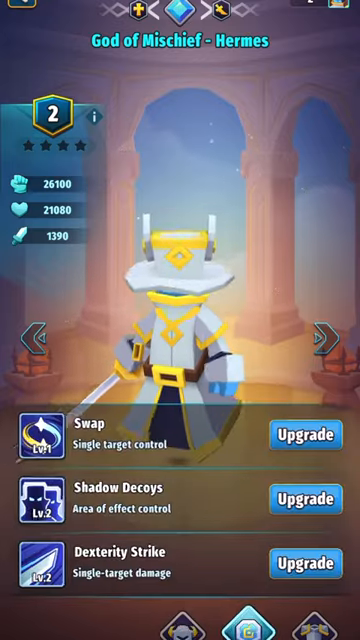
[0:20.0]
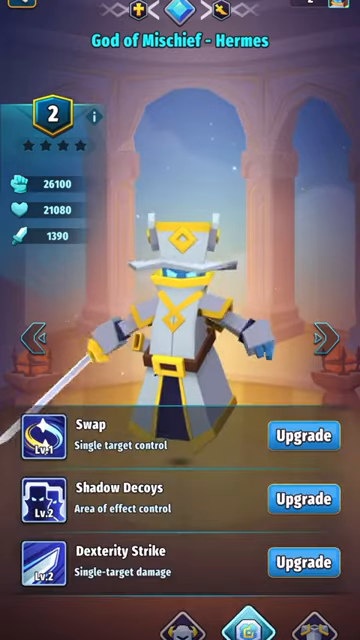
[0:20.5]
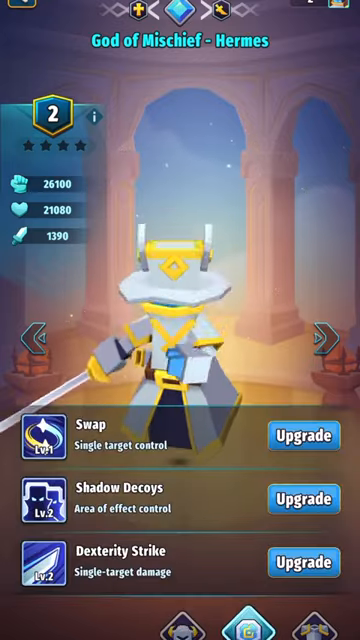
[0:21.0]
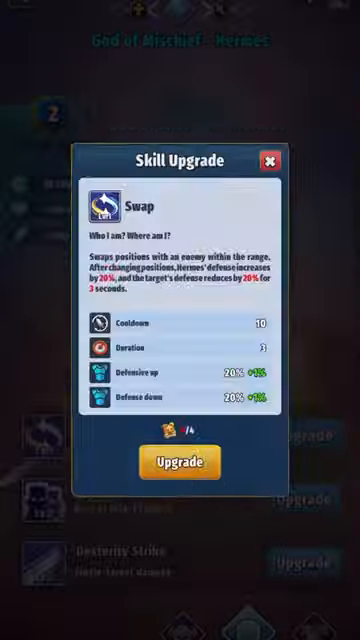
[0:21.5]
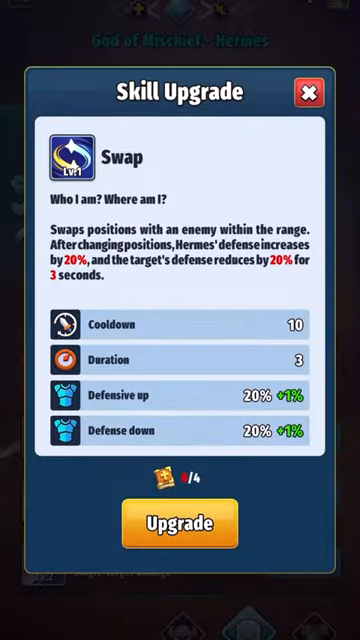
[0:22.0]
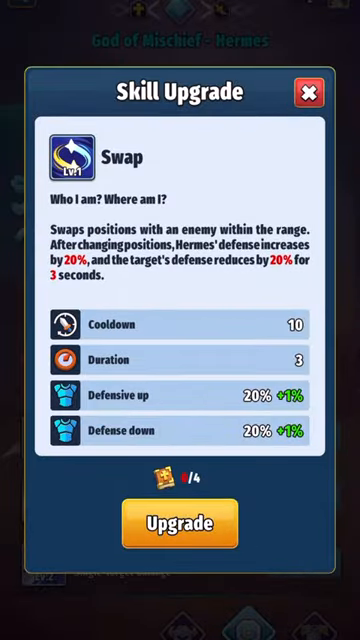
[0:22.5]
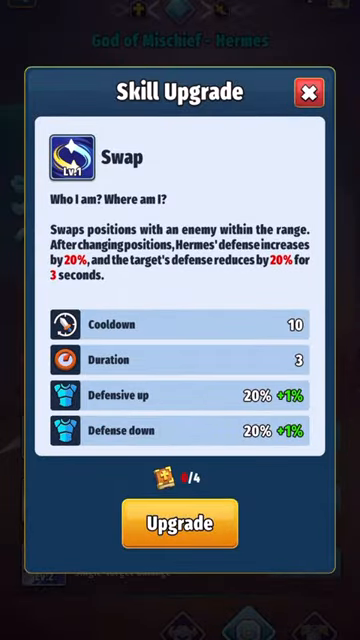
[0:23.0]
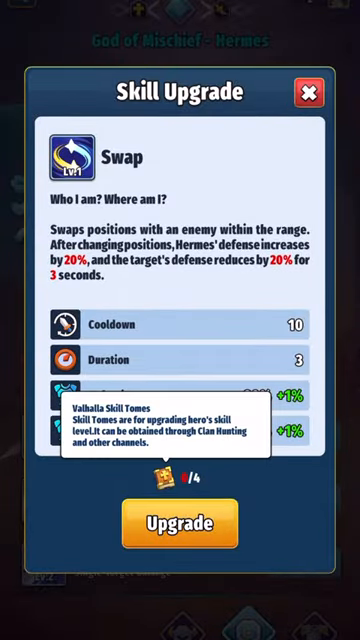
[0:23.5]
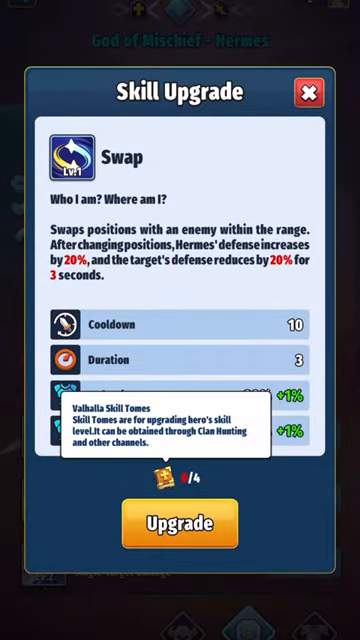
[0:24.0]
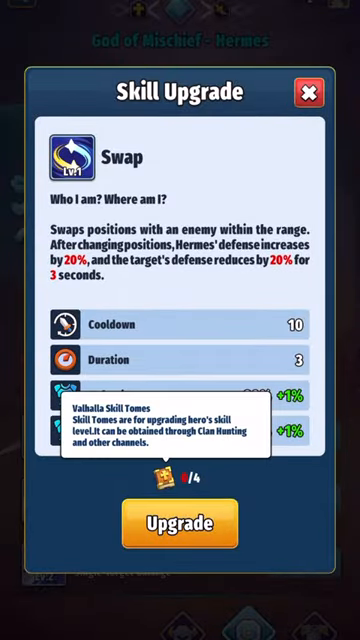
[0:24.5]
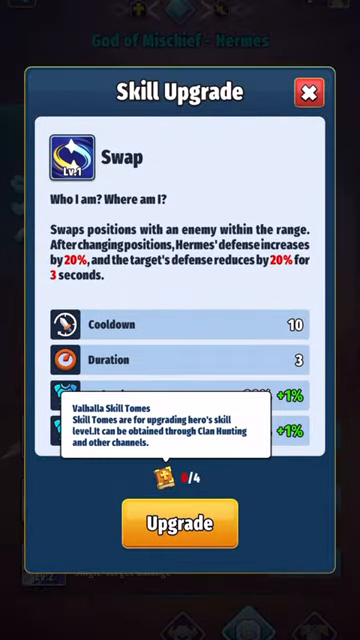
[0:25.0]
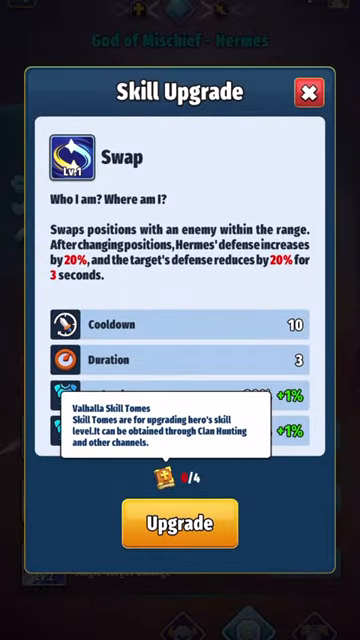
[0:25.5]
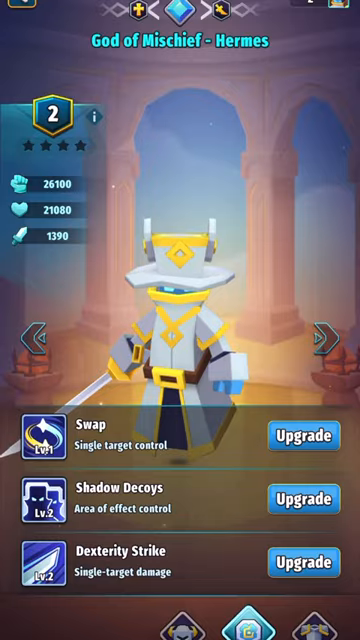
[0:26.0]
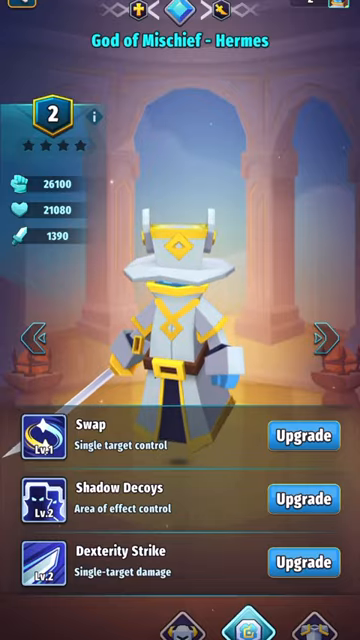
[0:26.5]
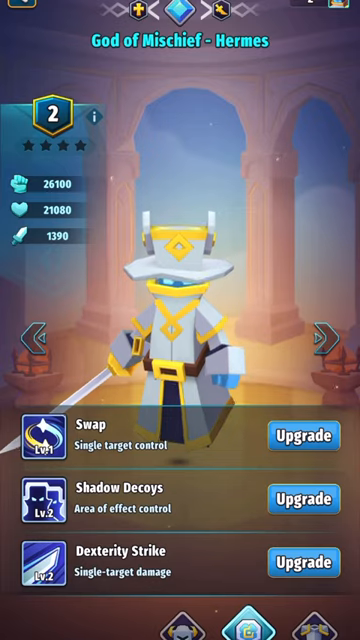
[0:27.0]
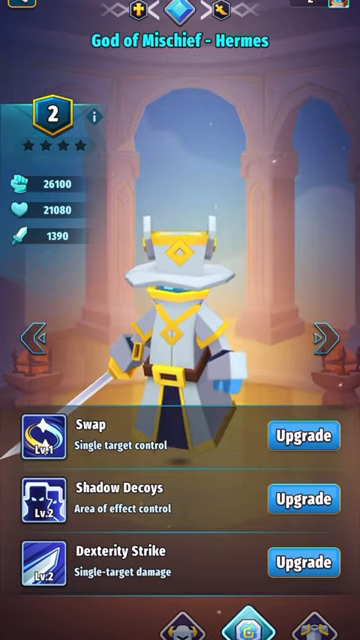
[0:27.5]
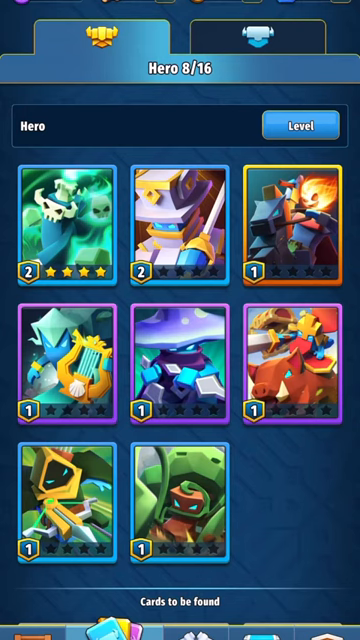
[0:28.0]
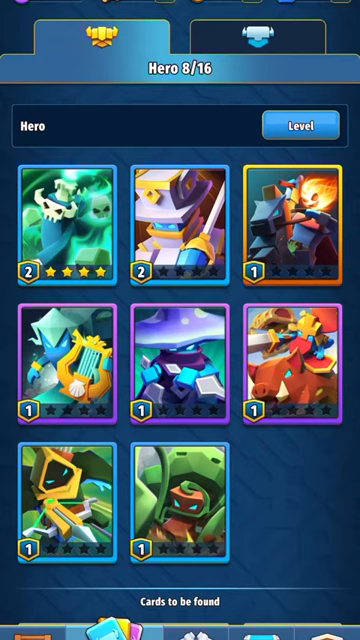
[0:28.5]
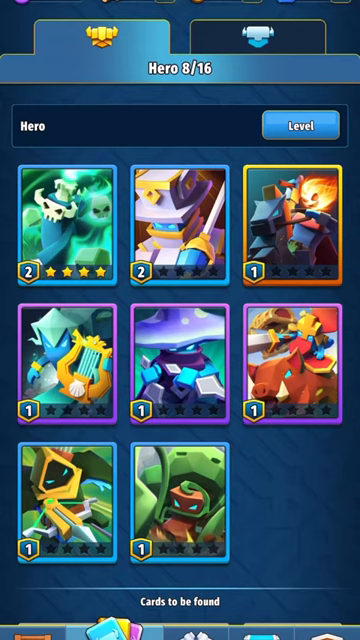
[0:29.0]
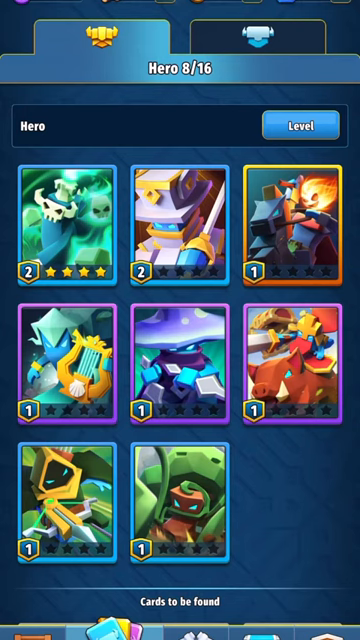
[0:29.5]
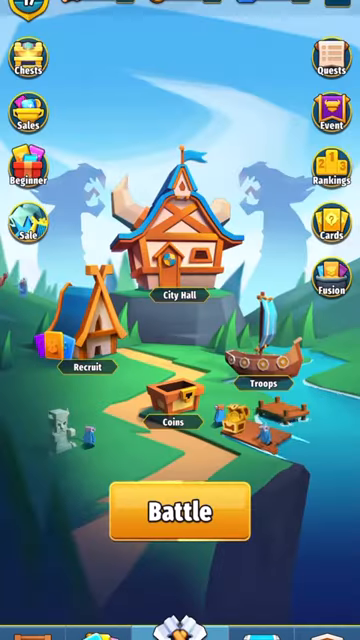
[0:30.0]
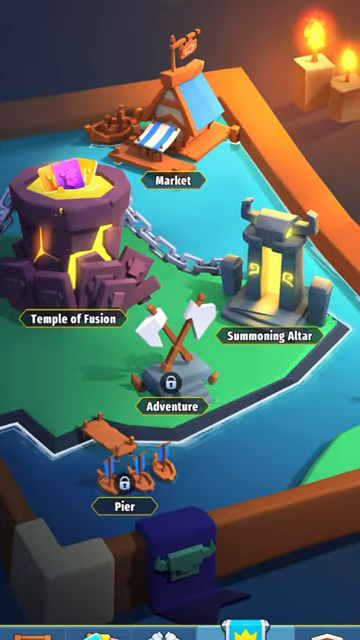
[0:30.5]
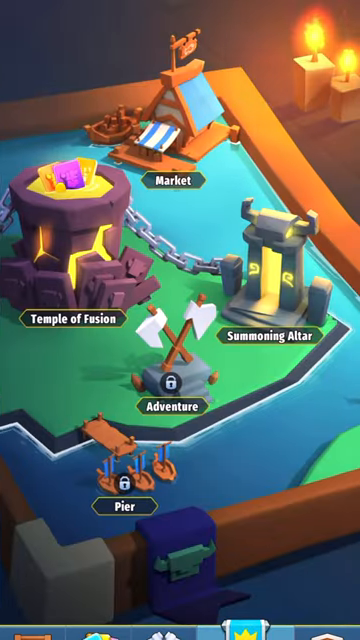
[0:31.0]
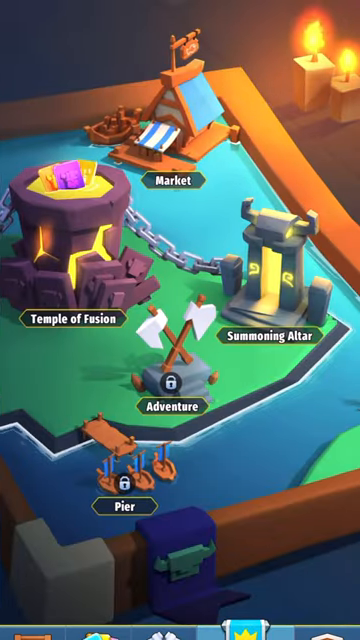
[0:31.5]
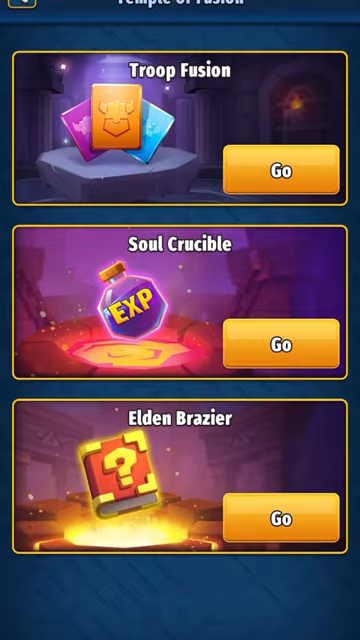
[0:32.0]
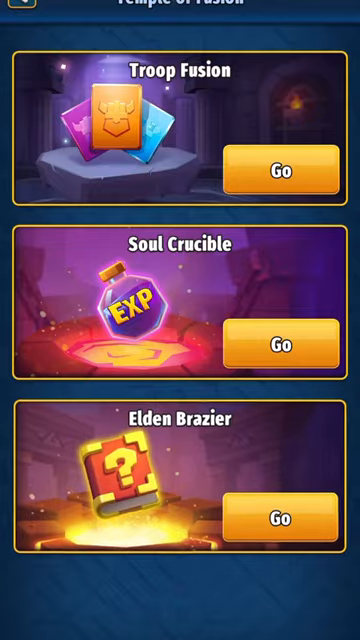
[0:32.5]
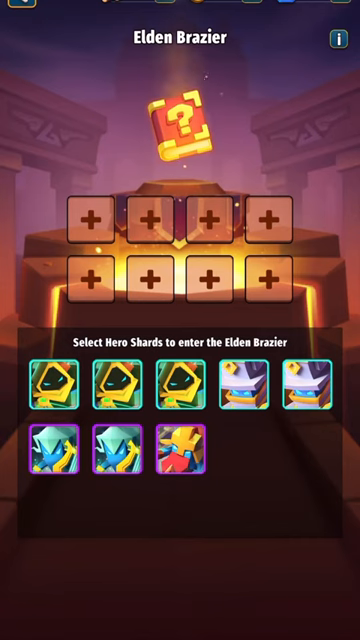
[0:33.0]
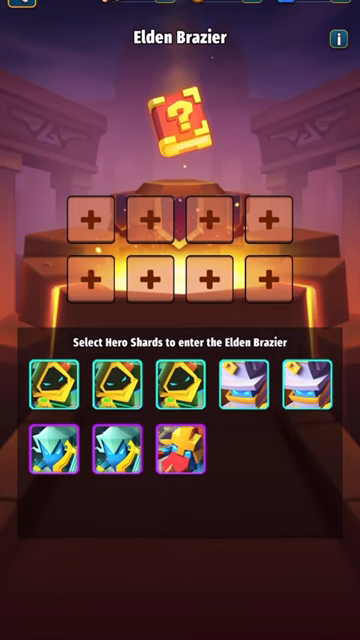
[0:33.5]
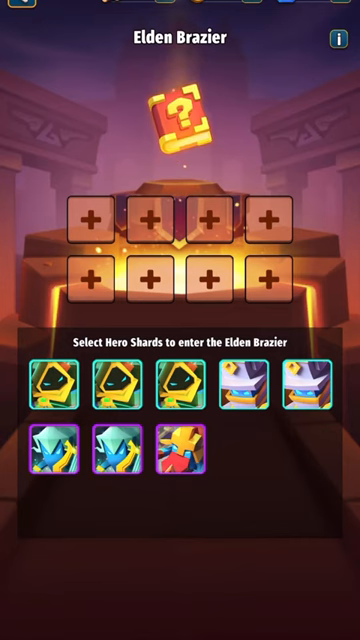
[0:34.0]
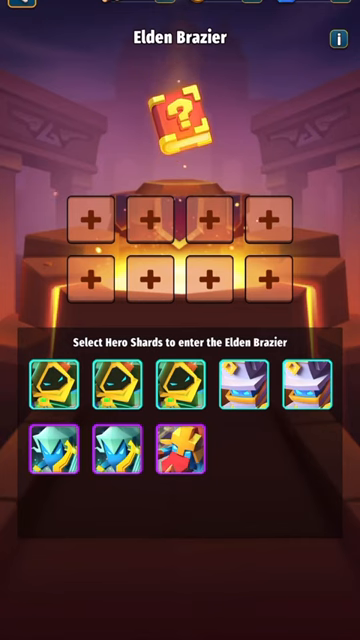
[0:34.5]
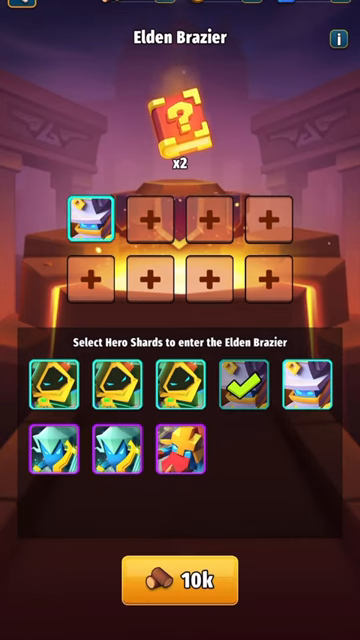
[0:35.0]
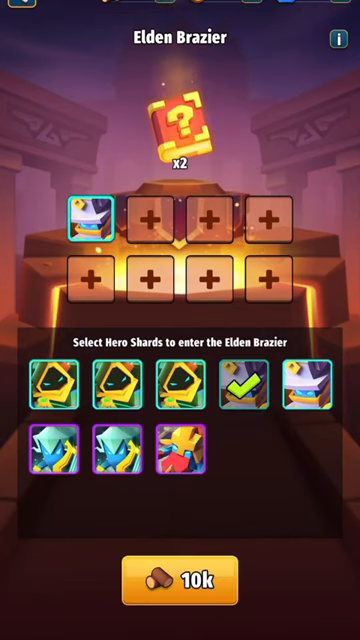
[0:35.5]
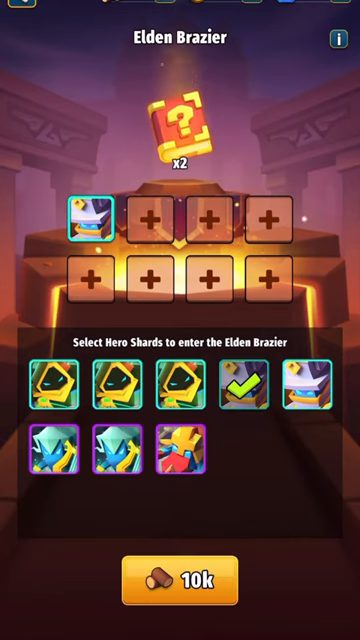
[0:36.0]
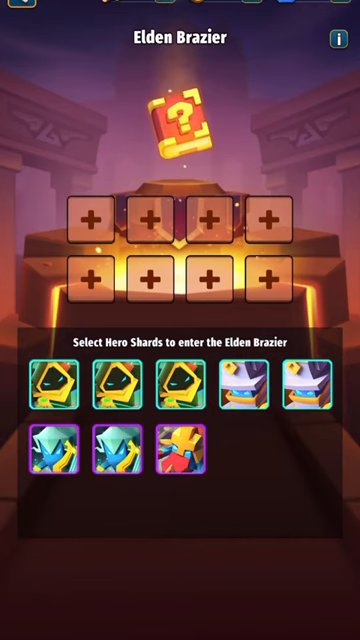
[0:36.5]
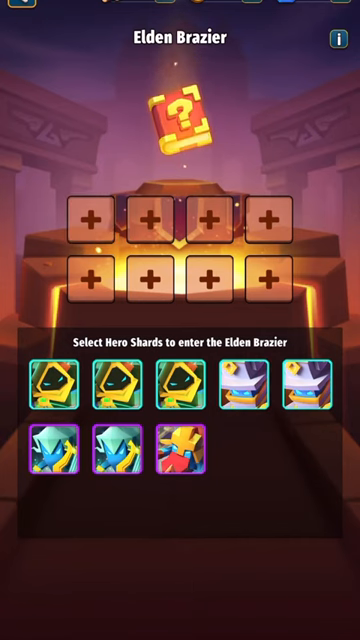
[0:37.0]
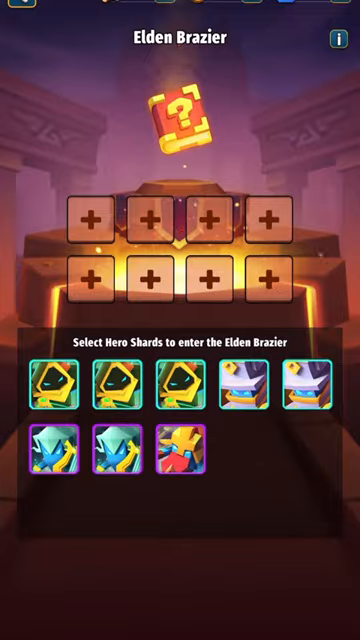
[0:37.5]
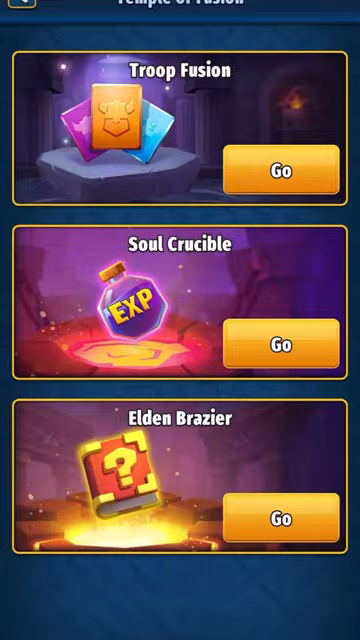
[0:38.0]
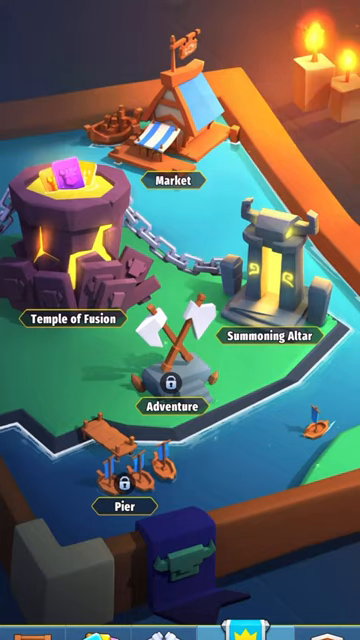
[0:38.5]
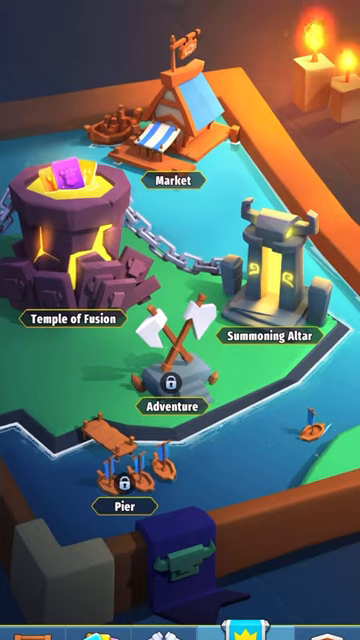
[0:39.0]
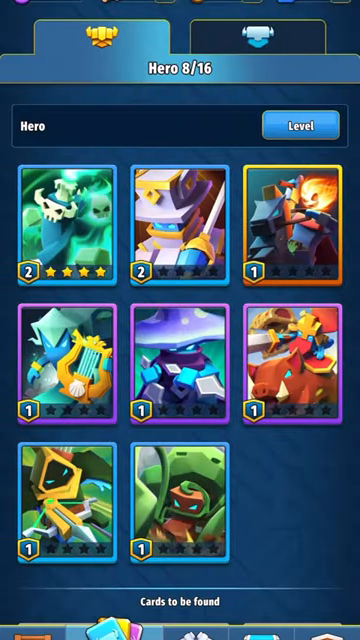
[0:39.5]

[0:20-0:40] One of the characters from the card page is selected. Its level number is 2, and various specs and numbers about the character are shown. The character is boxy, with blue glowing eyes that pop out of a large gray and yellow outfit, and there is a large belt buckle around it. A skill upgrade pop-up shows different information that can be upgraded. The user apparently does not want to upgrade, and goes back to the screen with the character wearing the belt buckle. The page with the cards is then displayed again, followed by the home screen and the page showing the Temple of Fusion. The Temple of Fusion is pressed again, opening the game with the eight icons, where the user seems to be pressing icons and trying to guess how to get into this part of the game.